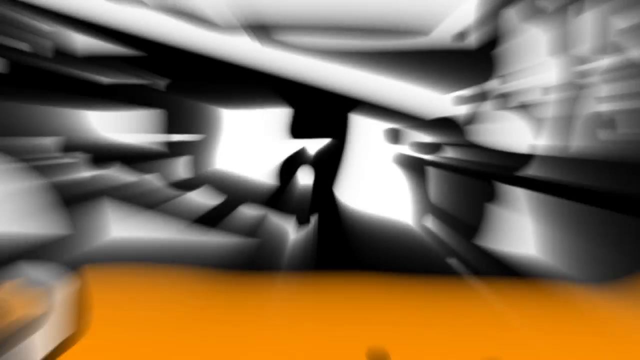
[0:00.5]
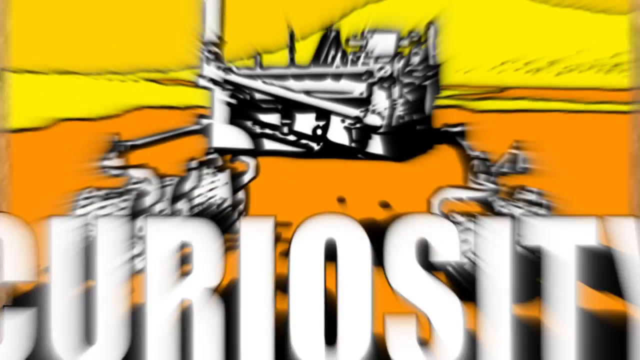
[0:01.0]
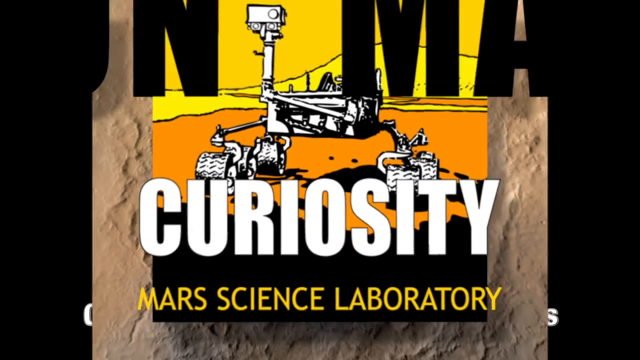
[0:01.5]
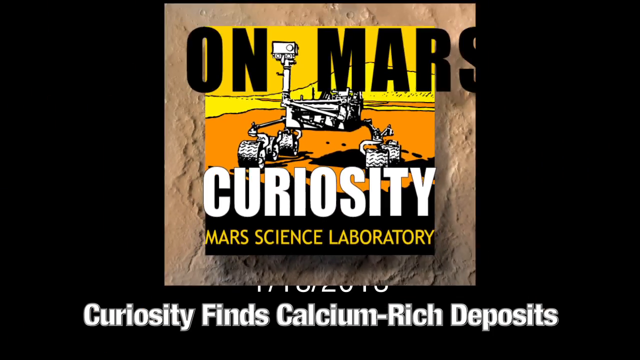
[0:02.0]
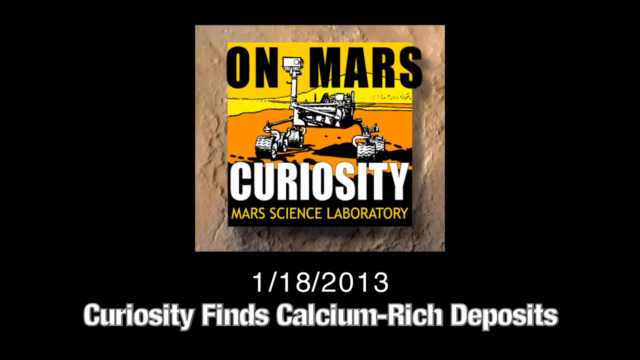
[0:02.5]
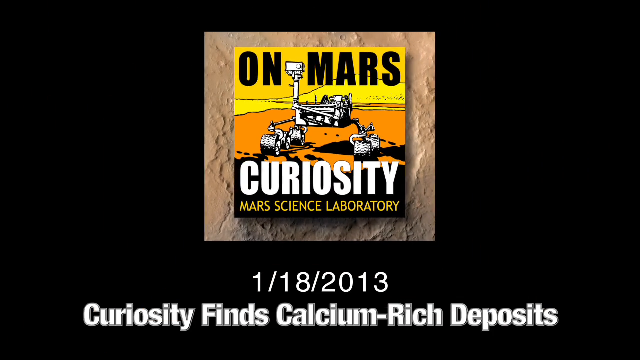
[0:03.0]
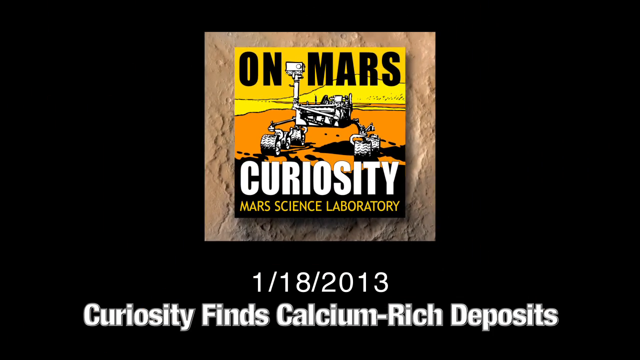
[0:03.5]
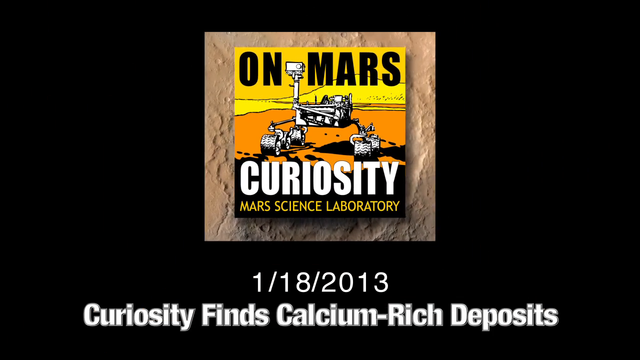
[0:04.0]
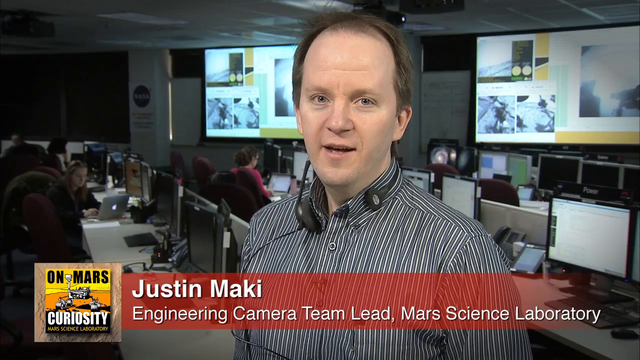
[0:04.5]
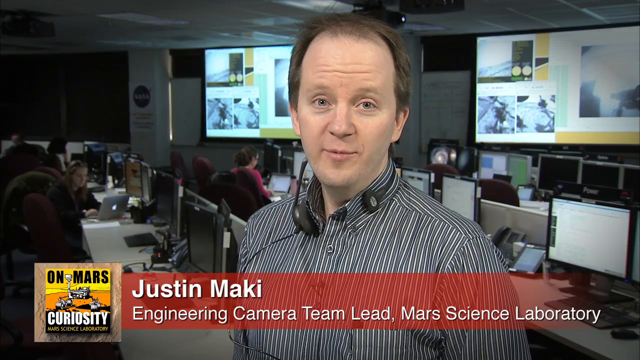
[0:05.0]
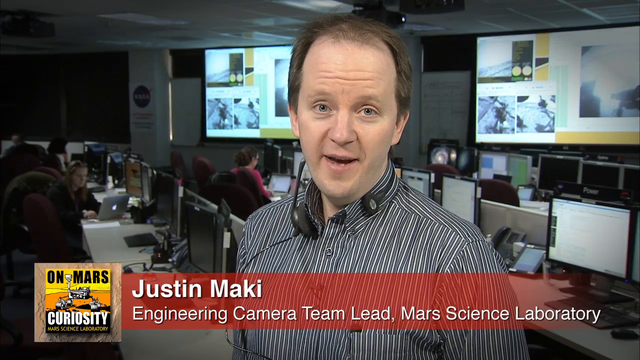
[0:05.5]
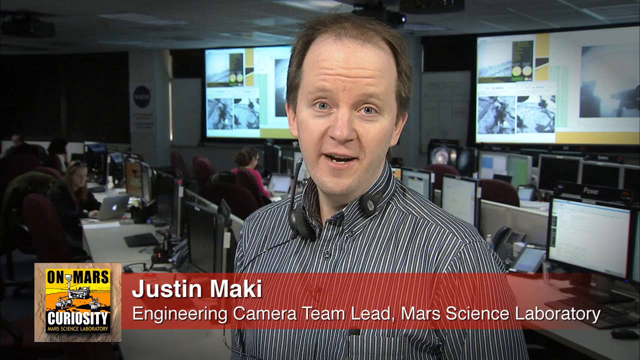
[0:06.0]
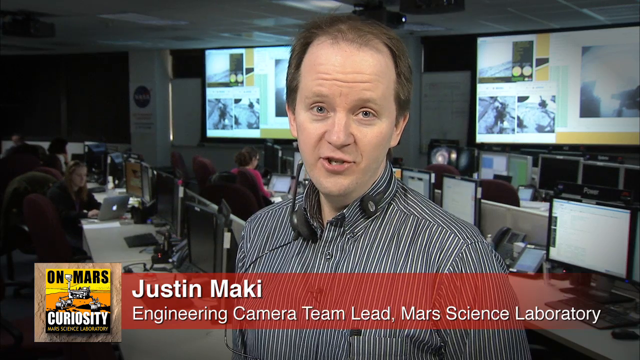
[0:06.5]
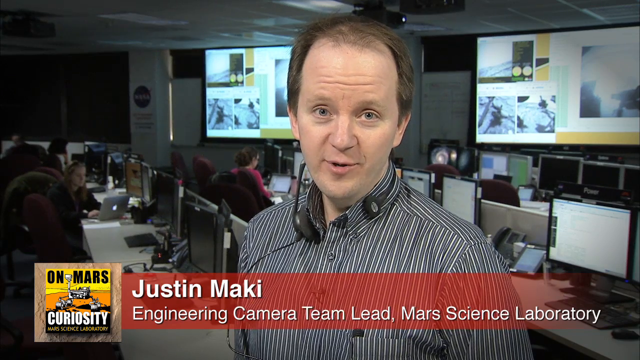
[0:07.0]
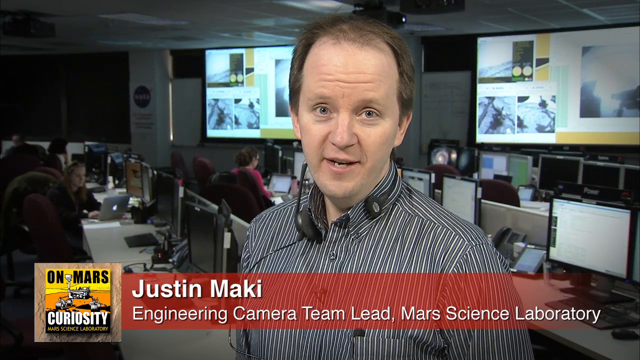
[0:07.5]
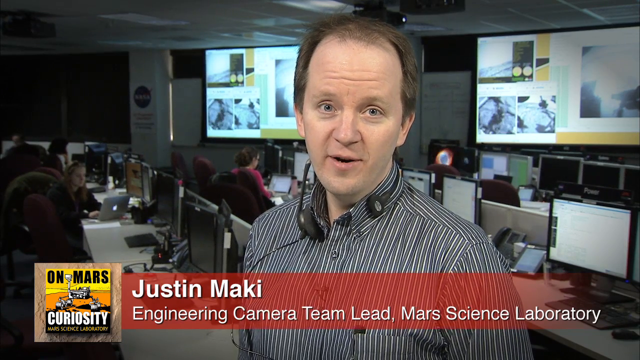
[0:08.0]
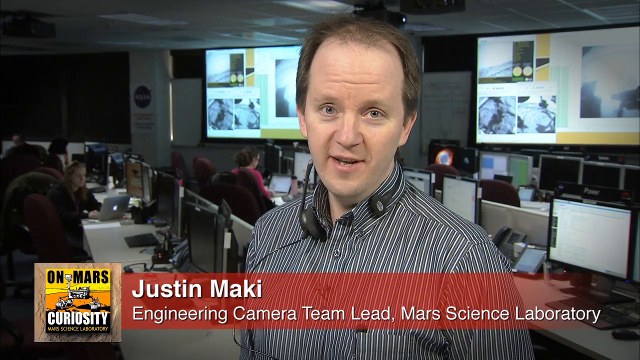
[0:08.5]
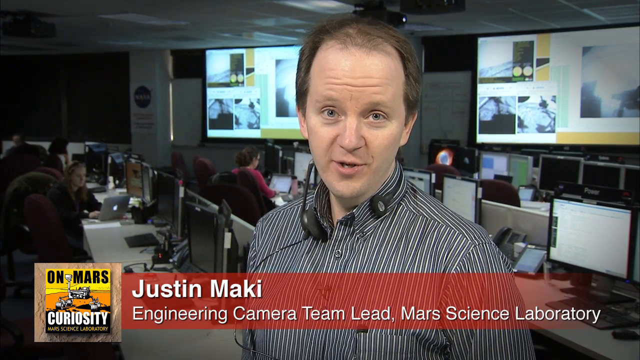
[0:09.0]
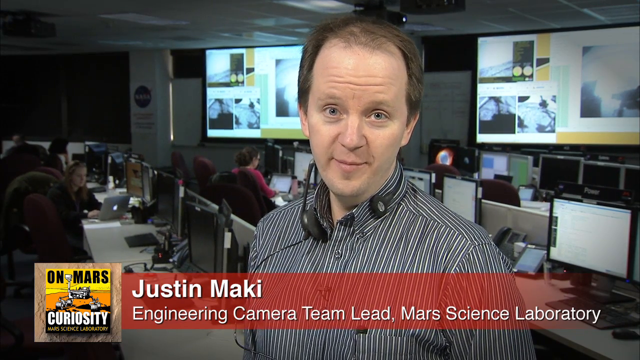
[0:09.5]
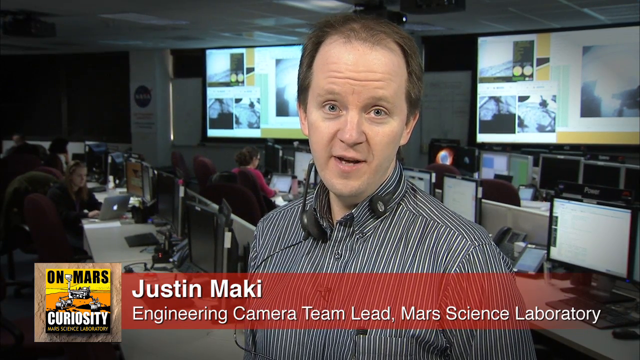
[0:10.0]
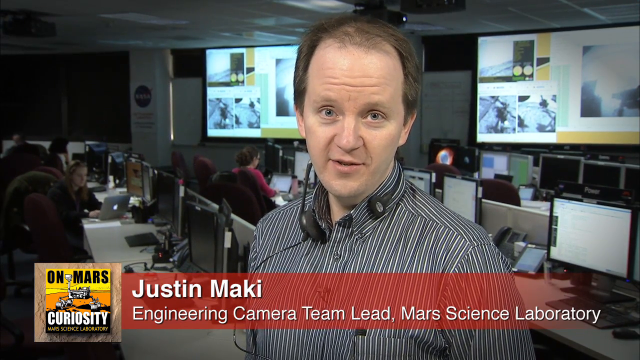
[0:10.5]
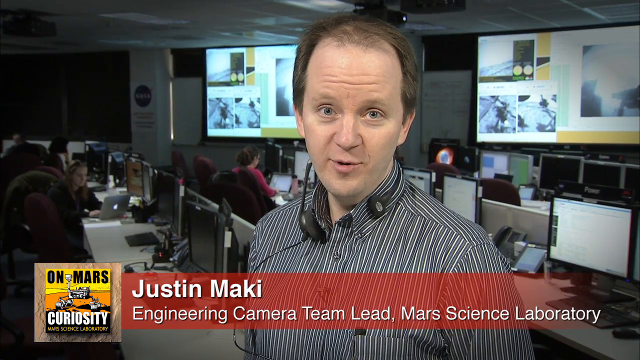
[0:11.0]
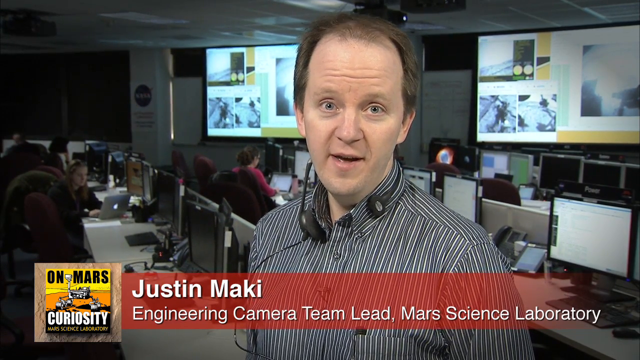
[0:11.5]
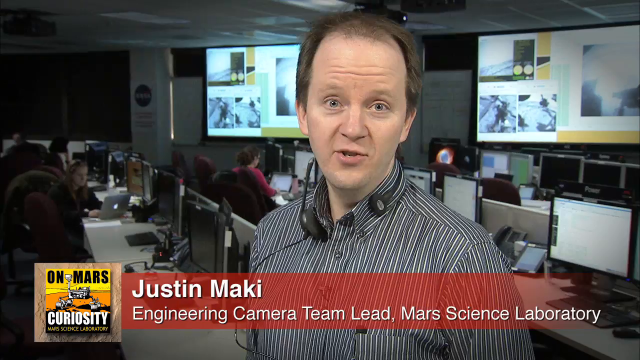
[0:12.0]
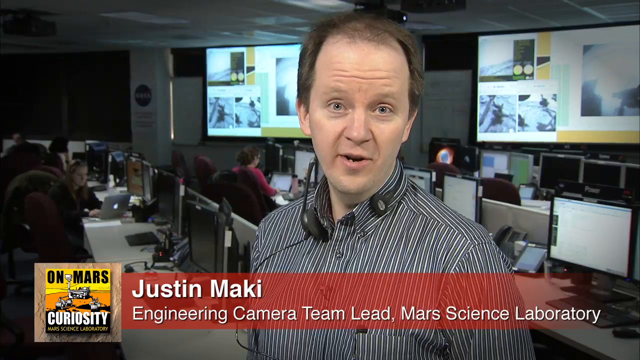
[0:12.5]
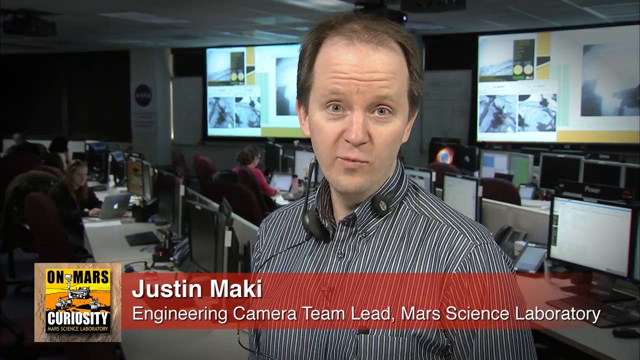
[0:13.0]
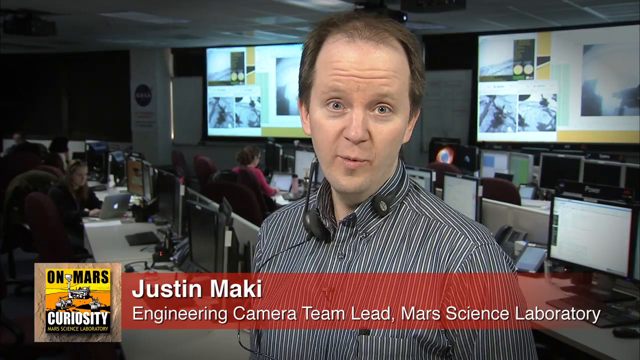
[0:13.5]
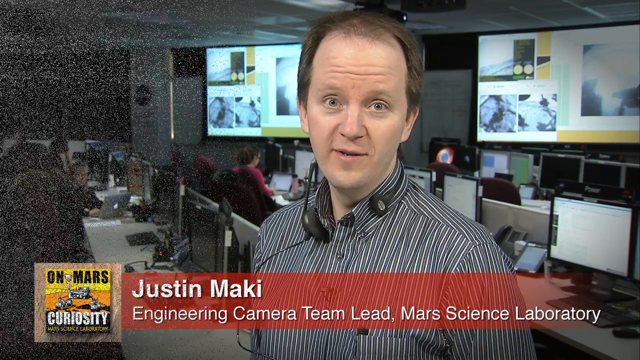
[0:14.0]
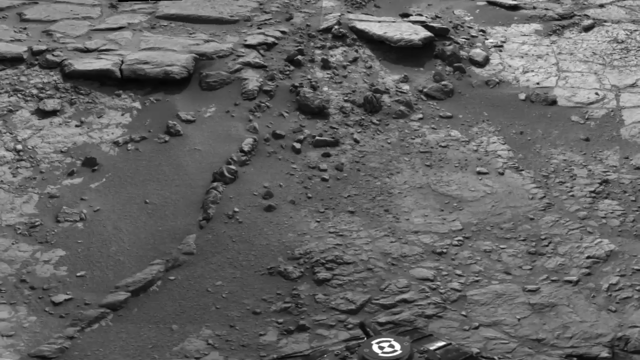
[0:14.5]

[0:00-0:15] The video is about the Mars Curiosity rover. A gentleman, apparently introducing the rover, seems to be talking directly to the camera. Behind him is a setting with many computer monitors, apparently a central location where the activities of the Mars Curiosity rover are observed. He is the single gentleman in the forefront, with maybe three or four other technicians in the background working on their computers. Text at the bottom reads "Justin Mackey, engineering camera, team lead, Mars science laboratory". The video periodically cuts back and forth to a scene that is presumably the surface of Mars. Several of the monitors in the background behind the speaker display images apparently of what the rover's cameras are seeing at that time.